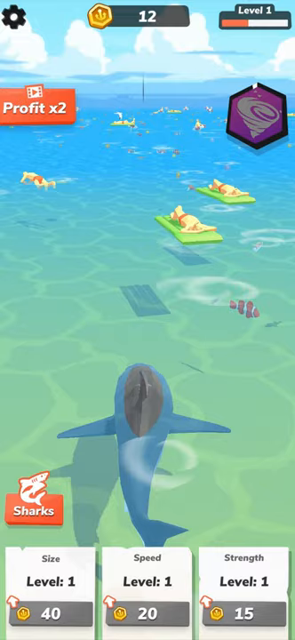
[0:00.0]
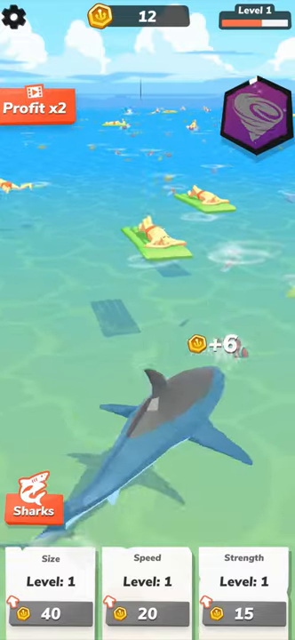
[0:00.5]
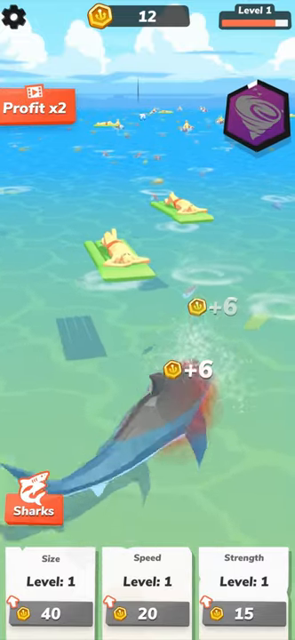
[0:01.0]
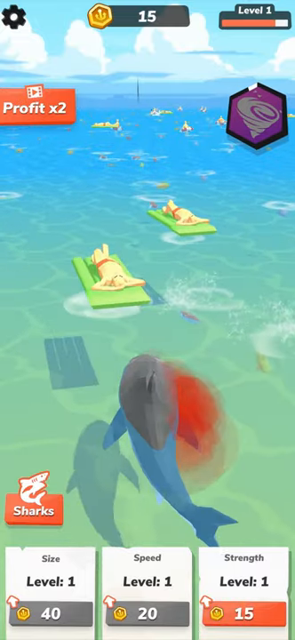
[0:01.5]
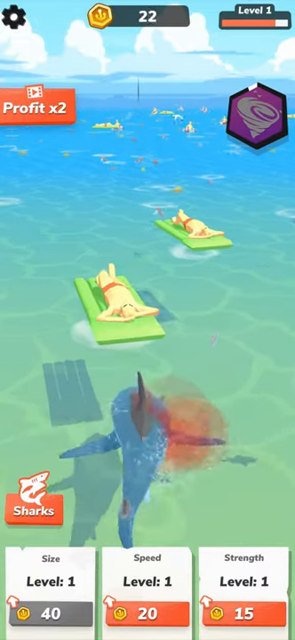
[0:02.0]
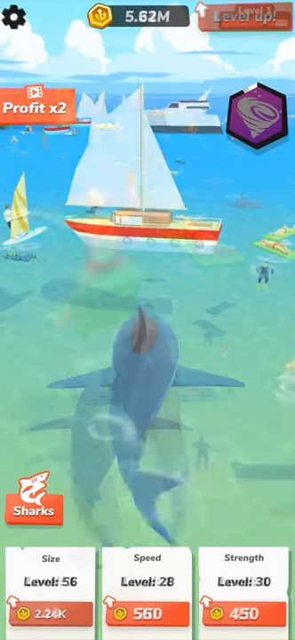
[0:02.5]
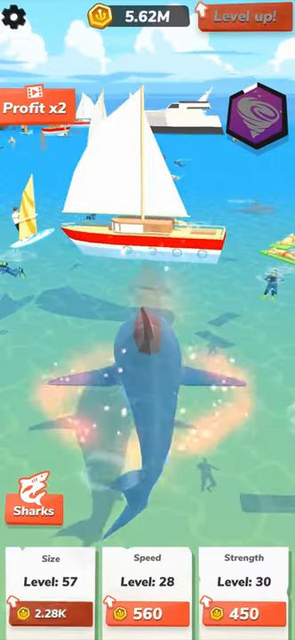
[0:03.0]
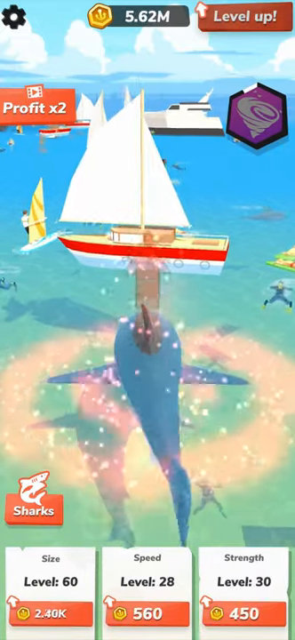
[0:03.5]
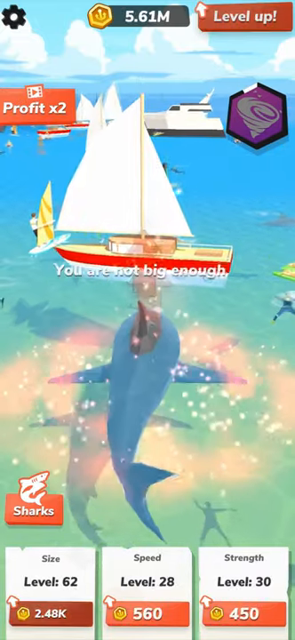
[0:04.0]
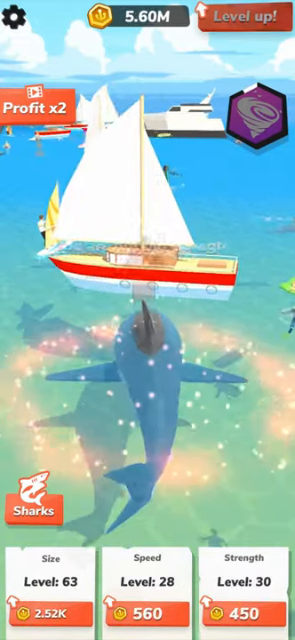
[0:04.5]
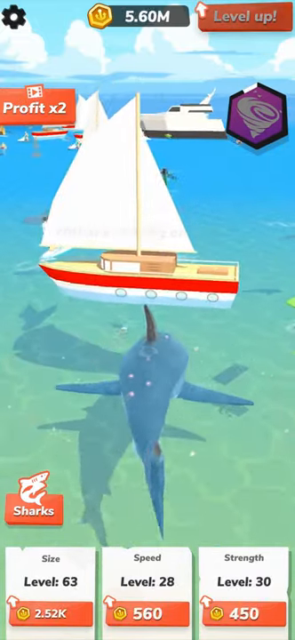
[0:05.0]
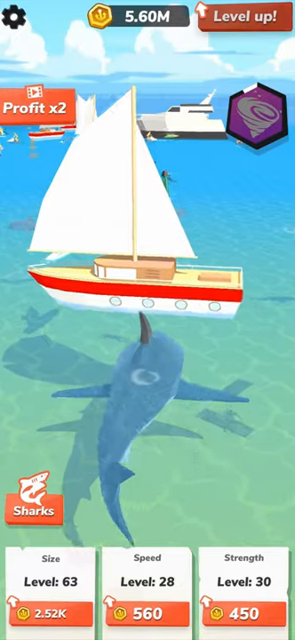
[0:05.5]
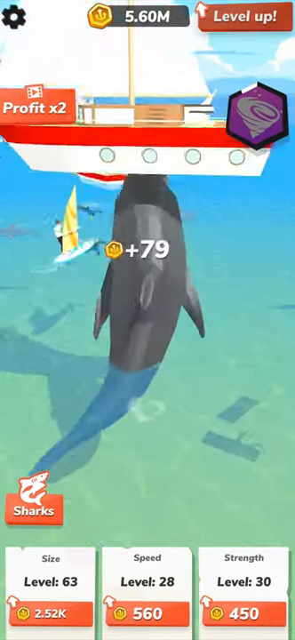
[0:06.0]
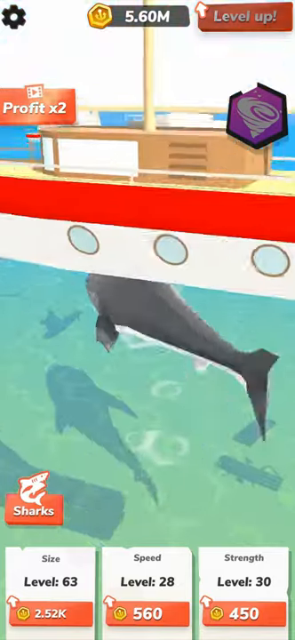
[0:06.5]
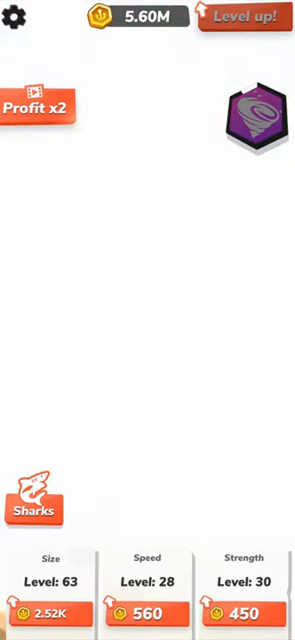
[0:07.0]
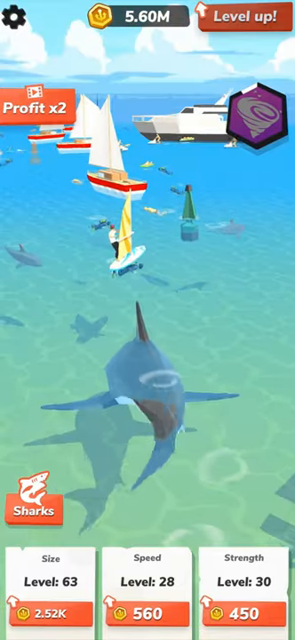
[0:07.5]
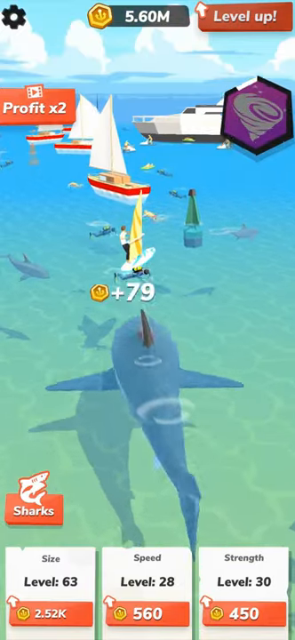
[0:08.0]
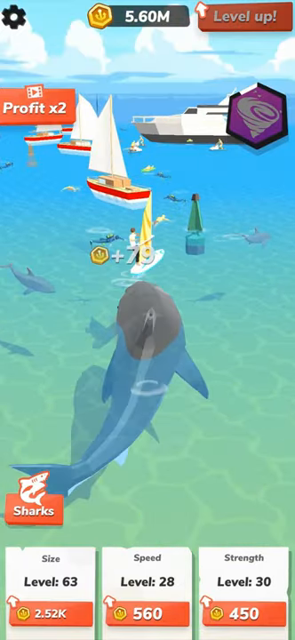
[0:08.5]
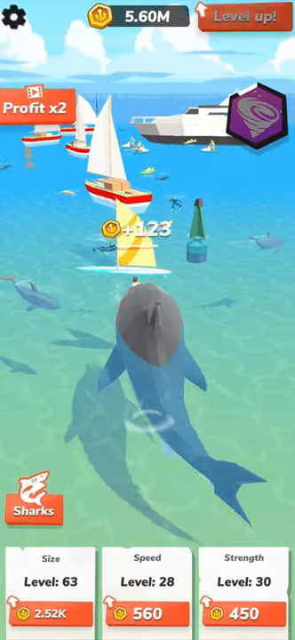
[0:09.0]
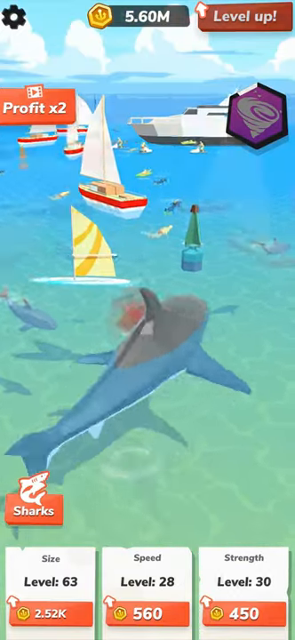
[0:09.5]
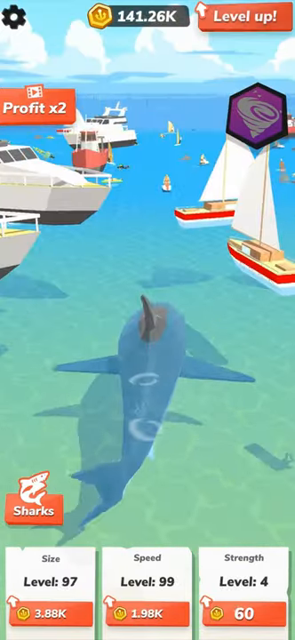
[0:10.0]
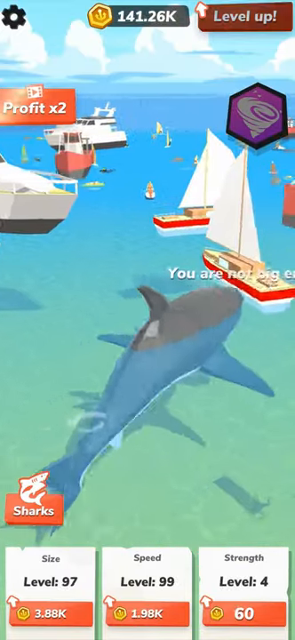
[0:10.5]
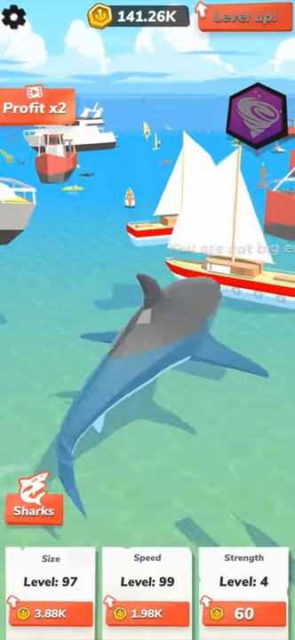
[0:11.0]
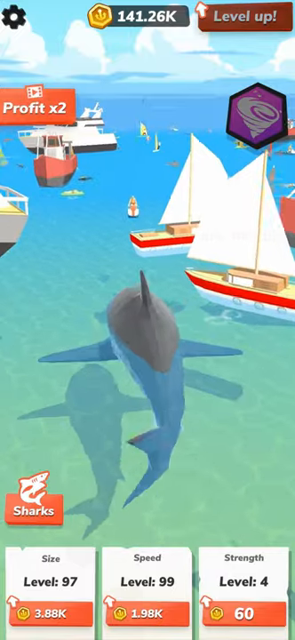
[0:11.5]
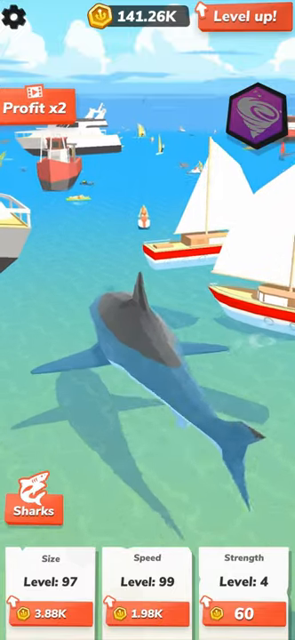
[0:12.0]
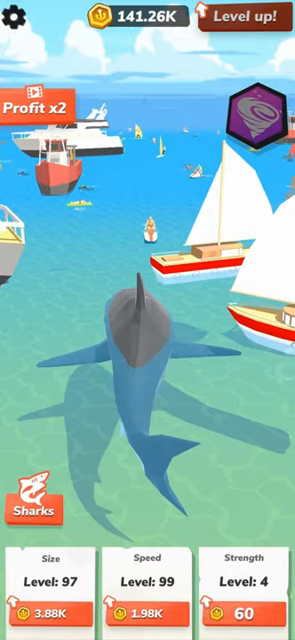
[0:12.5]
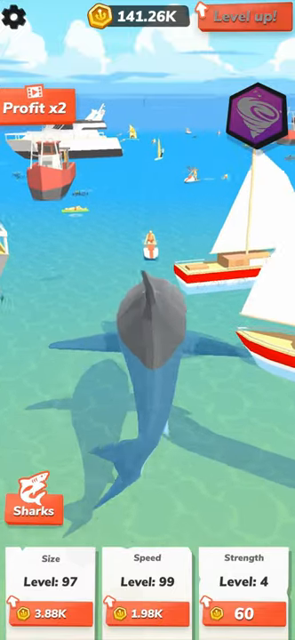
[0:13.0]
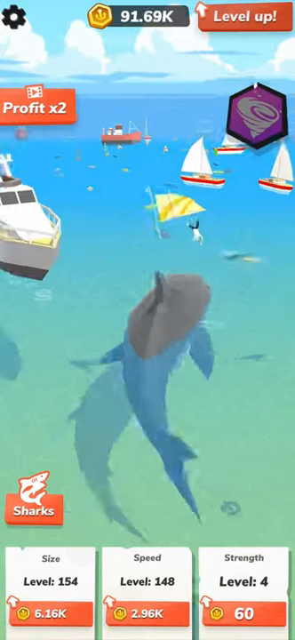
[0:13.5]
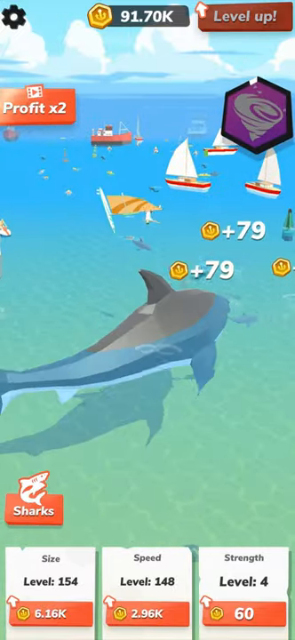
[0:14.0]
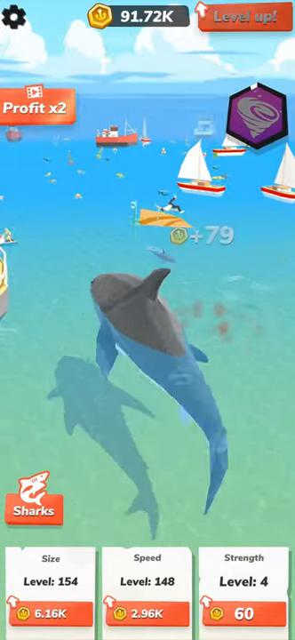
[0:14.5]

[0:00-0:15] An ocean scene shows a shark that moves toward various objects and nudges a boat, earning 79 points. There are a bunch of sailboats; as the shark touches them, they kind of move out of the way. The shark collects coins, eats fish, and knocks over people on little raft-type things. At the bottom of the screen it says "sharks, profit times two," and there is a video icon and a tornado-like icon with one little white square, shaped like a pentagon; as the shark knocks things over and gains points, the border goes from black to white. Also at the bottom it says "size level 63," "speed level 28," and "strength level 30," along with coins showing various numbers such as 3,000 and 1,000, which go up each time the shark eats a fish or collects bonus points. Text beginning "you are not" appears as the shark nudges a boat into the air. At the top there is a point tally reading "level one," which levels up, with a settings icon next to it. It is some sort of video game in which the player is a shark and seemingly gains points by causing destruction.